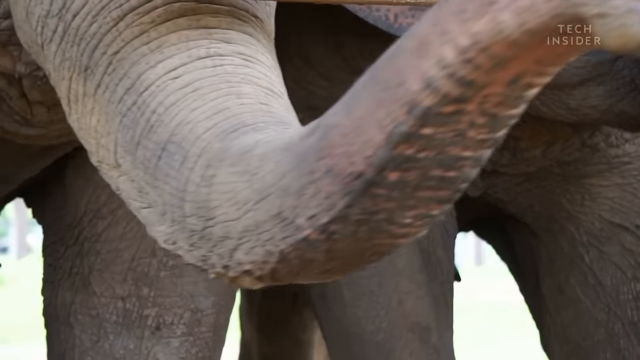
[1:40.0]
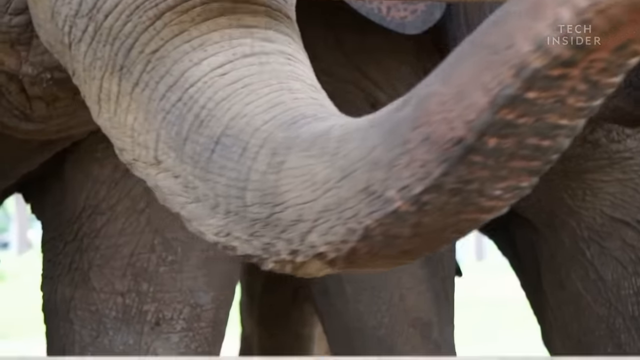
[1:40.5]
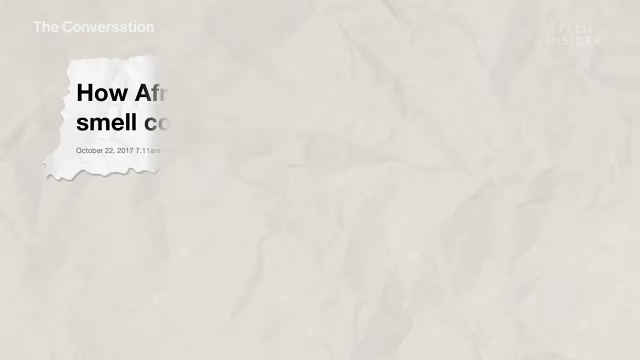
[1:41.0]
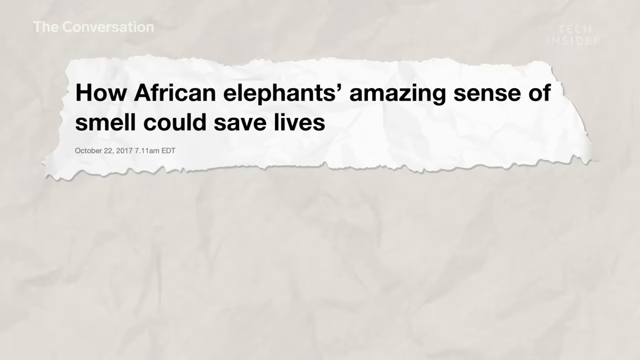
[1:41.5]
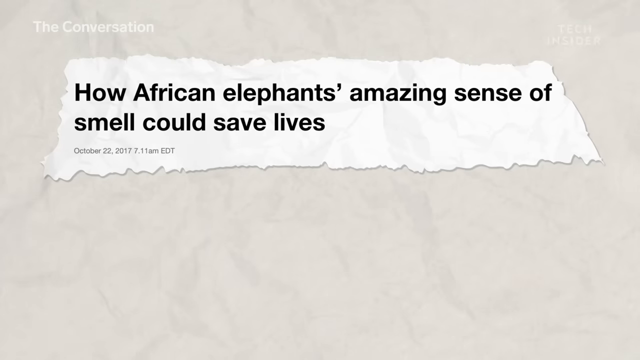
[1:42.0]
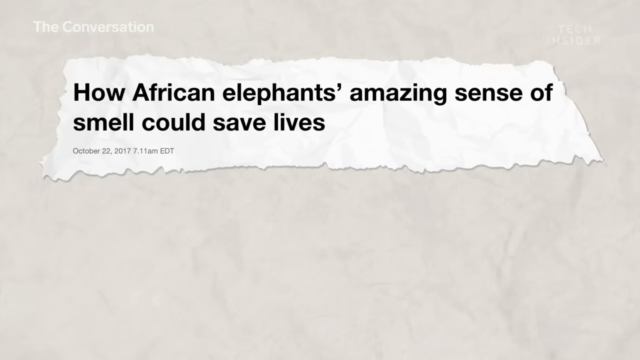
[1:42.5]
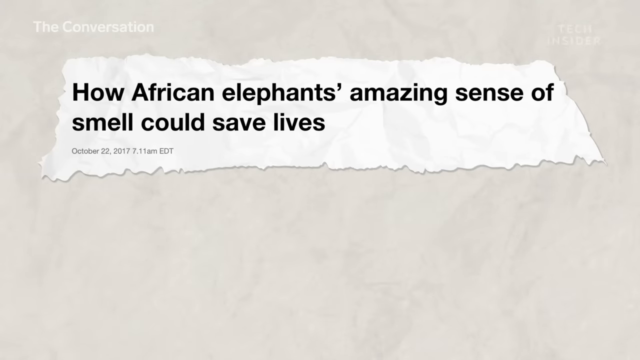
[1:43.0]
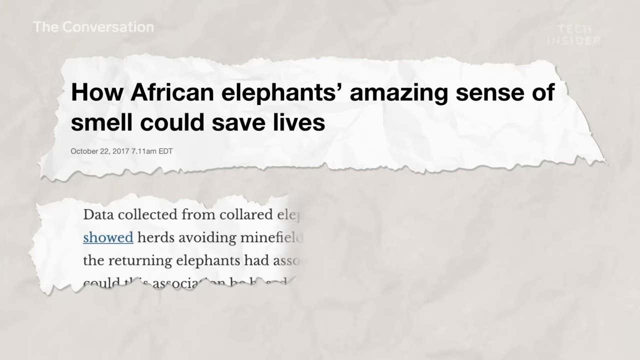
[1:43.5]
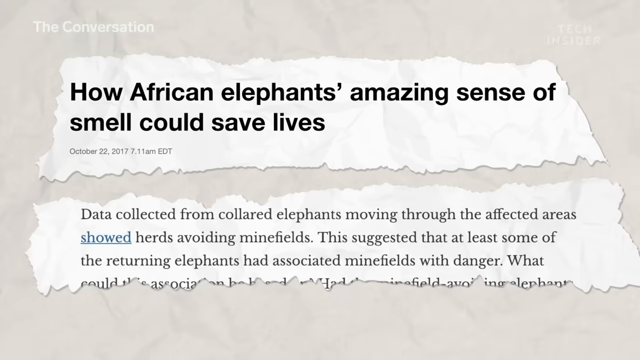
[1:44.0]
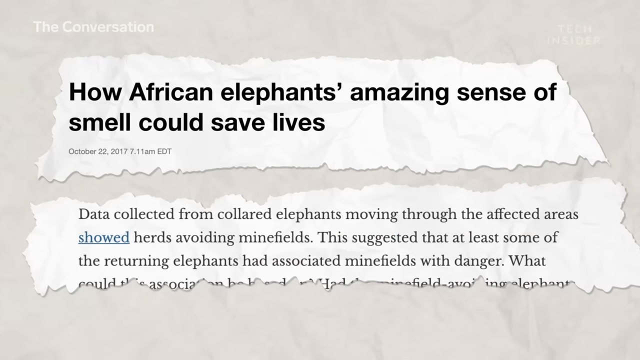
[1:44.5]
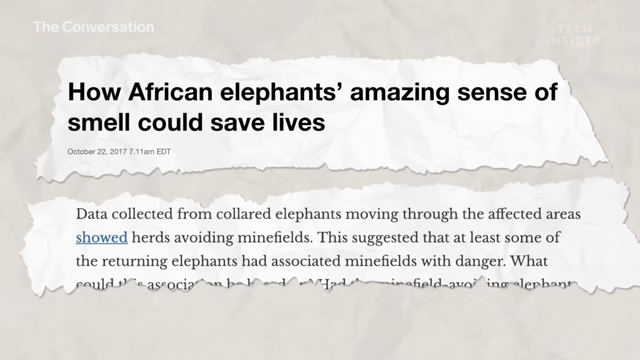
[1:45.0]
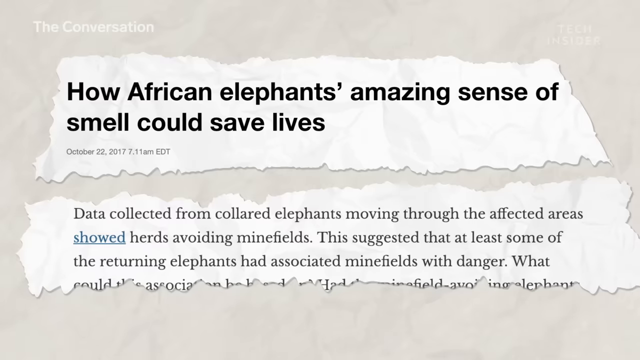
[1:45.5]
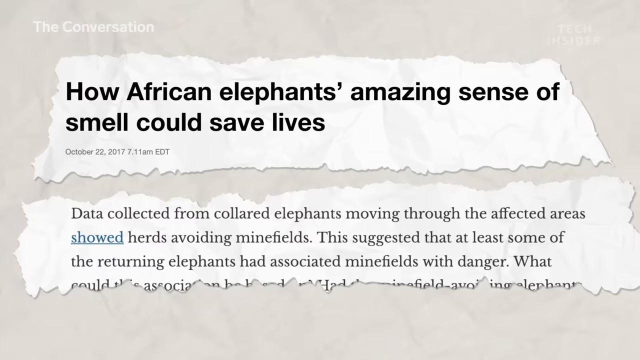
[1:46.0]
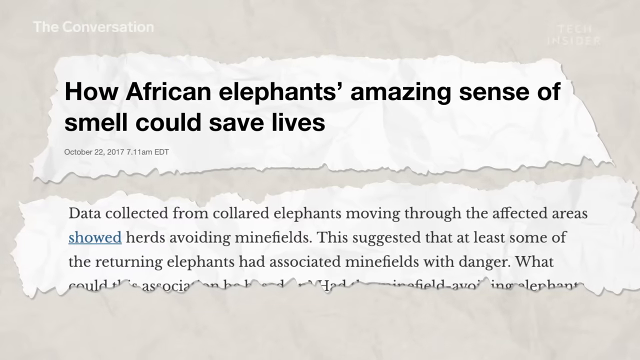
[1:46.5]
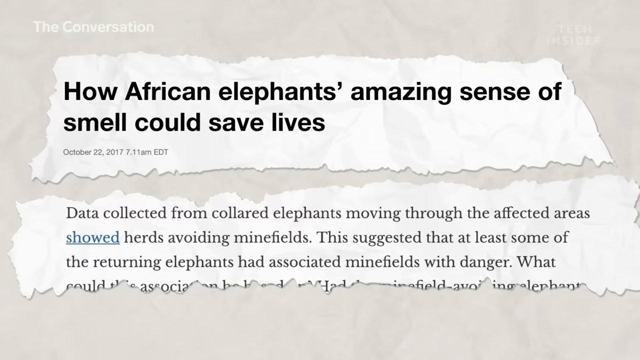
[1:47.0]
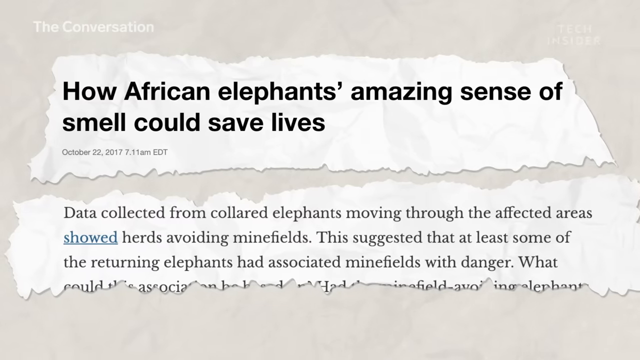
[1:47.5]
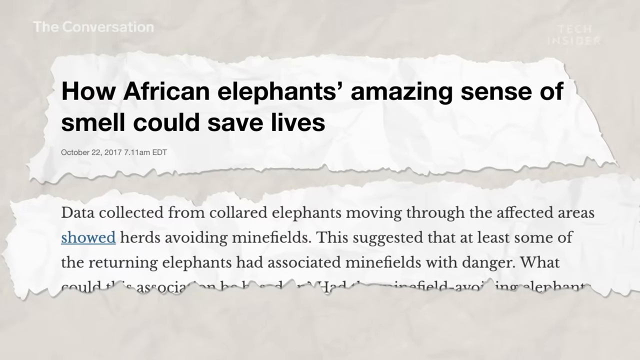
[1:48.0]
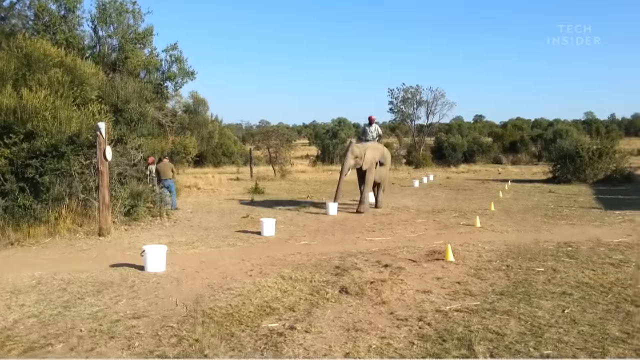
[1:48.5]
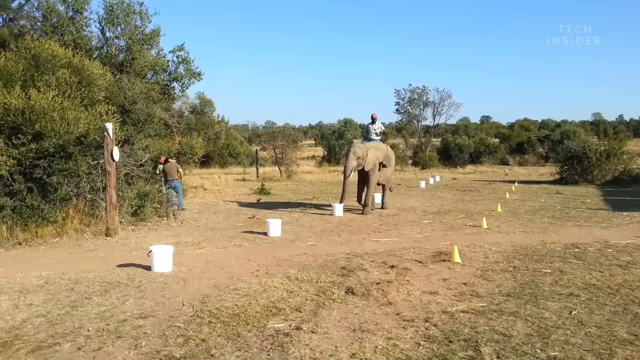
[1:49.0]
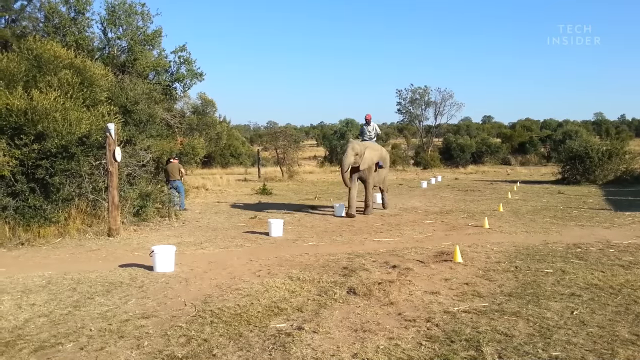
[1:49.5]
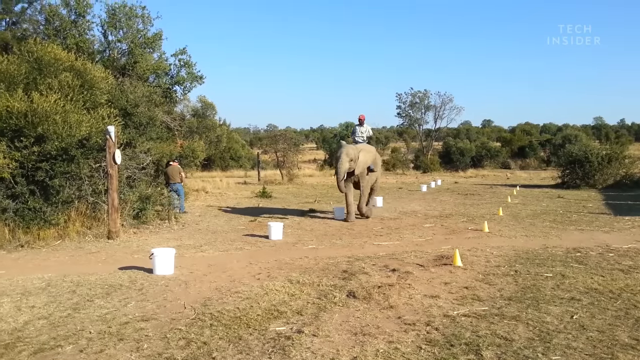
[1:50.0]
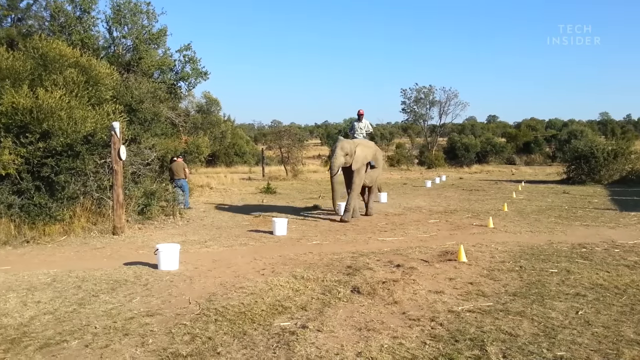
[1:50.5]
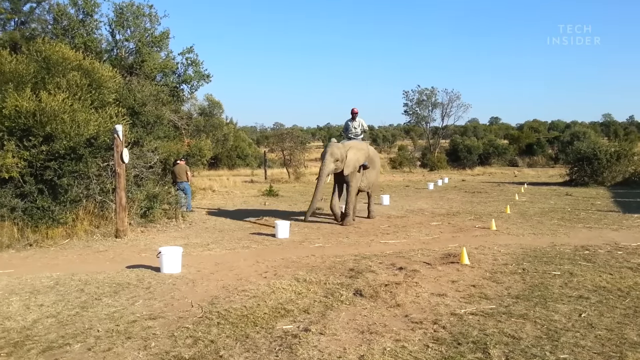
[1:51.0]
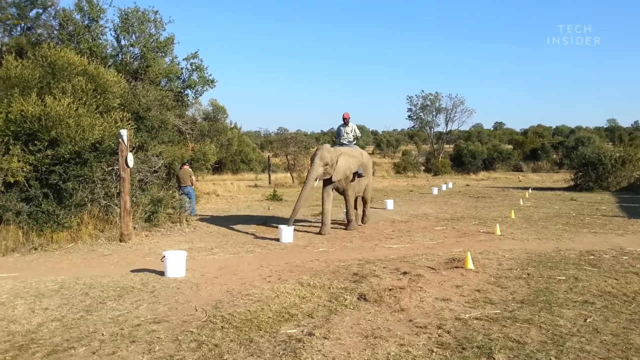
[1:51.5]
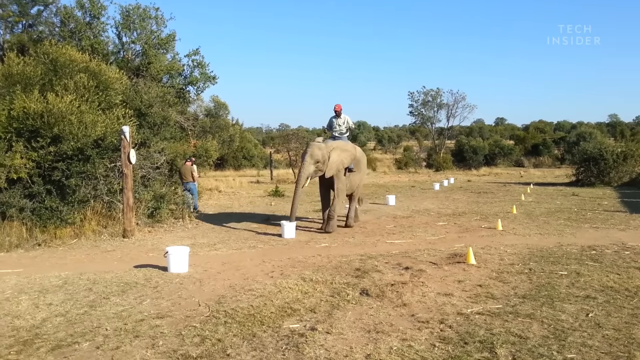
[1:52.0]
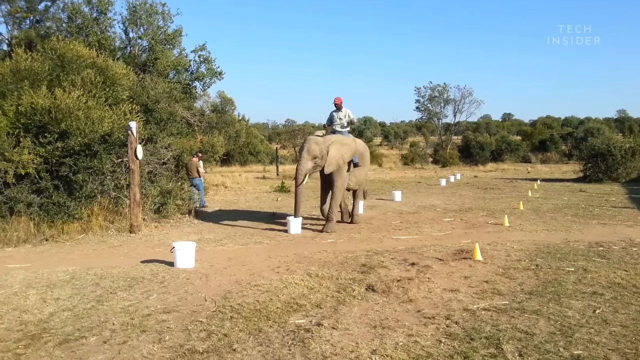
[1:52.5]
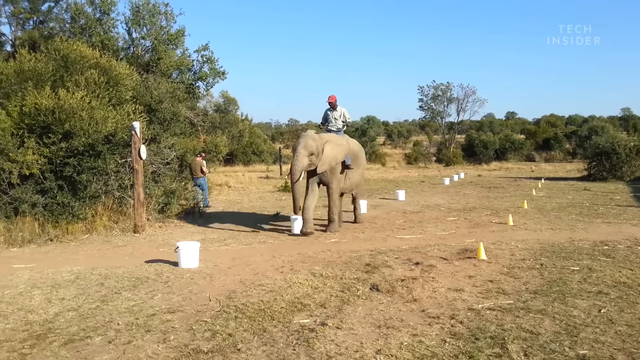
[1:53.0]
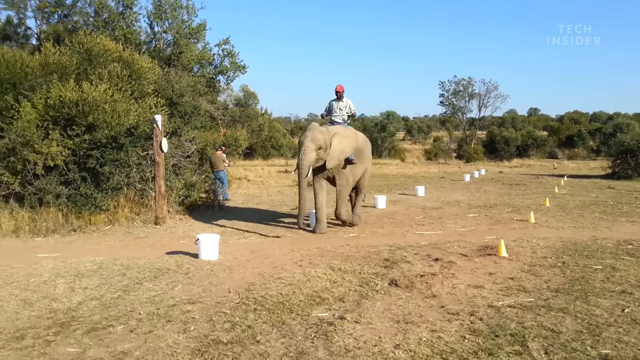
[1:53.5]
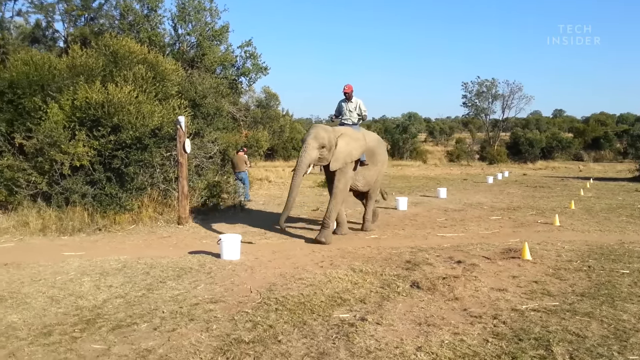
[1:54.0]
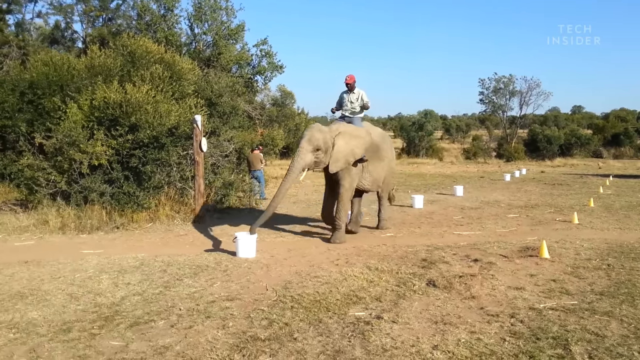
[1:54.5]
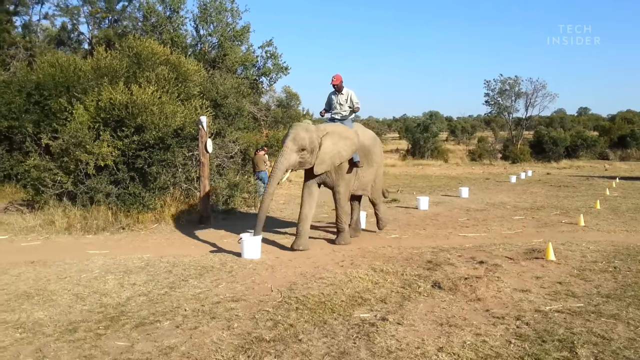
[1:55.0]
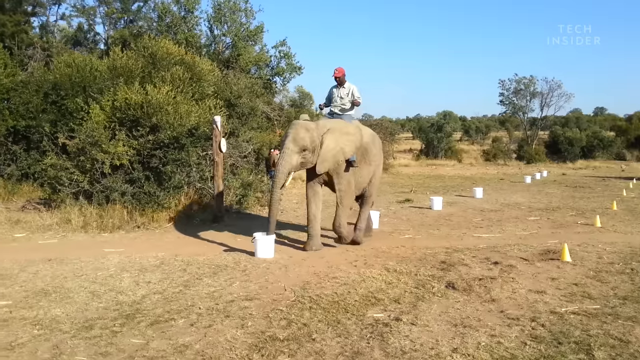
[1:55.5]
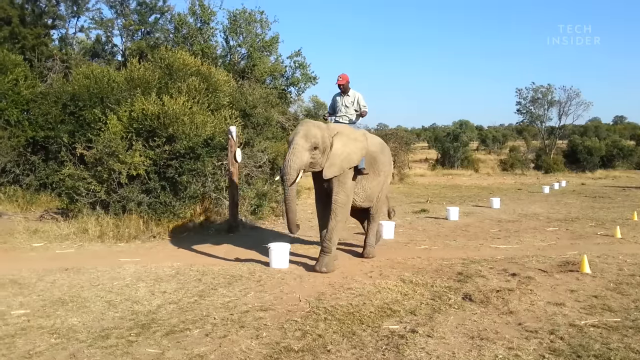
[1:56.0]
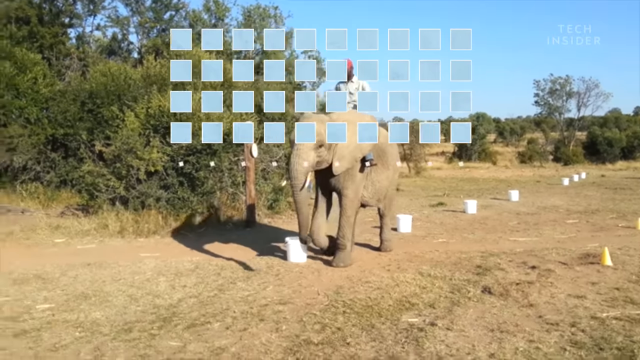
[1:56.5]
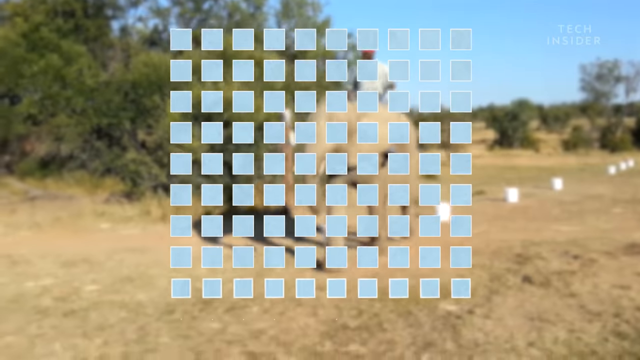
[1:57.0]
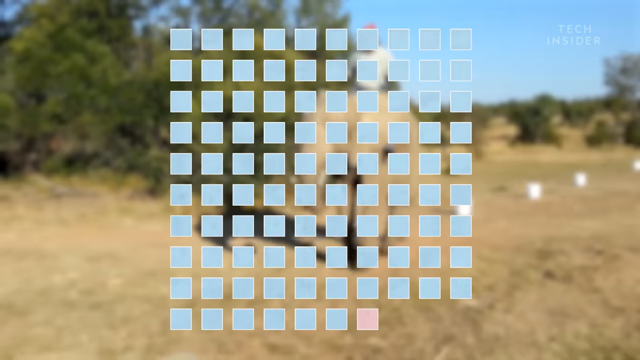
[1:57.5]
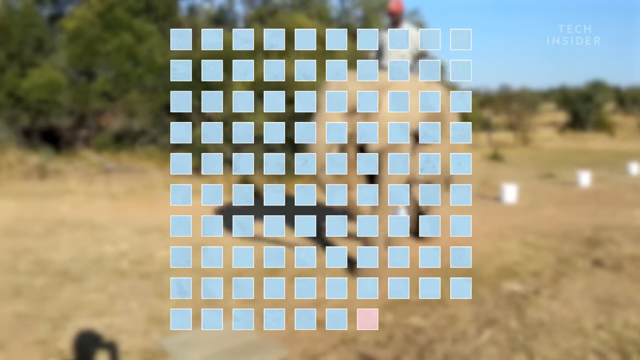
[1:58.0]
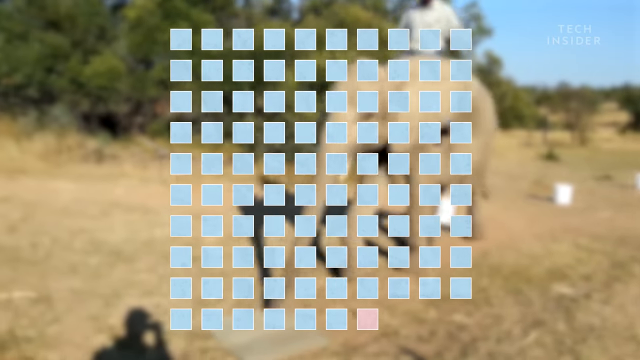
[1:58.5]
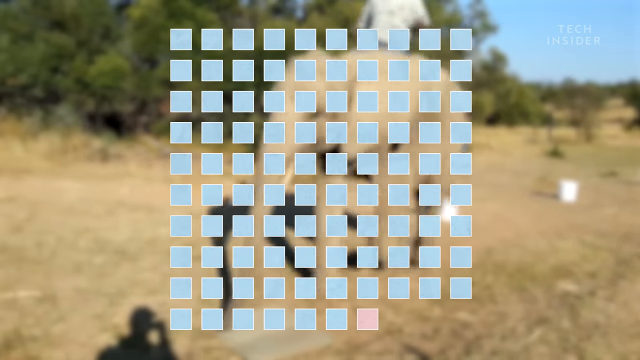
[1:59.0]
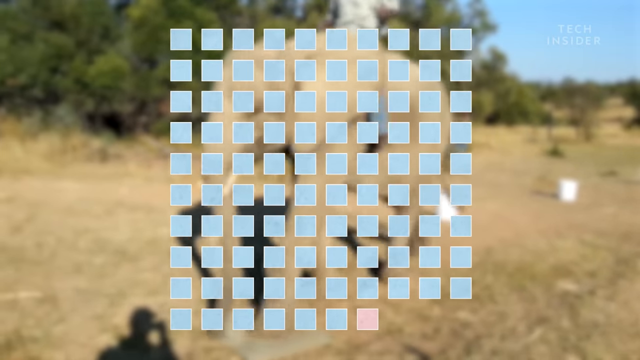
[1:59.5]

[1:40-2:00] A "Tech Insider" logo is in the top right as a slide shows an elephant. Another slide shows "the conversation" in the top left, while the Tech Insider logo in the top right is invisible. The headline reads "how African elephants amazing sense of smell could save lives", with the date "October 22nd, 2017, 7.11 a.m. EDT" below. A paragraph follows, part of it written in blue and underlined, including the sentence "This suggested that at least some of the returning elephants had associated minefields with danger". The page then breaks up like a ripped piece of paper. An elephant with someone on its back and another on the side of the road walk across what seems to be a course with buckets as obstacles. Many blue squares are shown graphically on the screen, with the buckets in white.